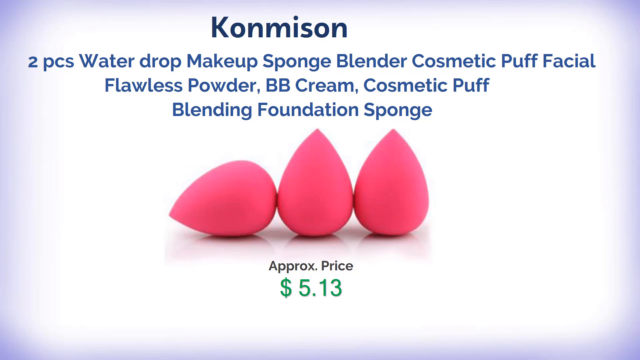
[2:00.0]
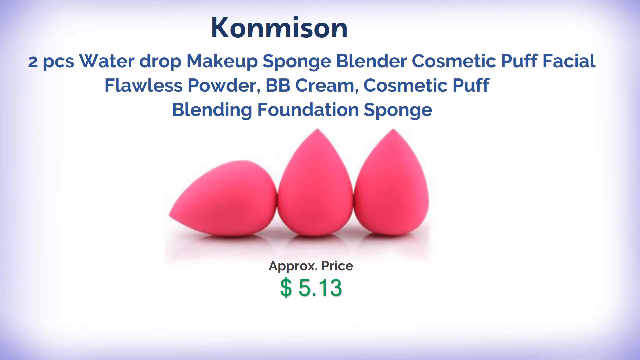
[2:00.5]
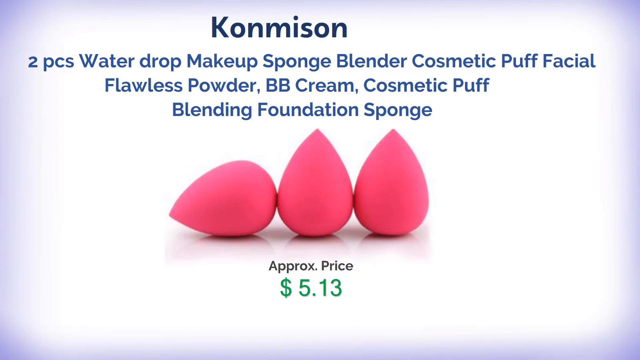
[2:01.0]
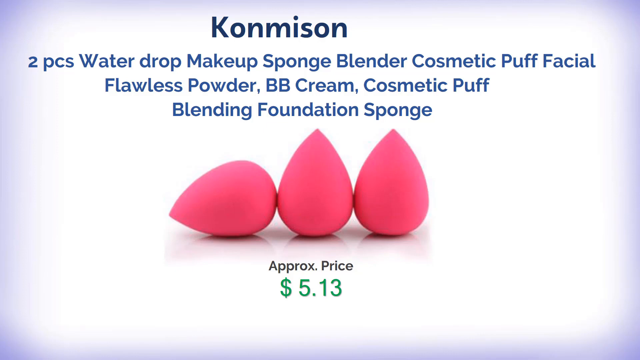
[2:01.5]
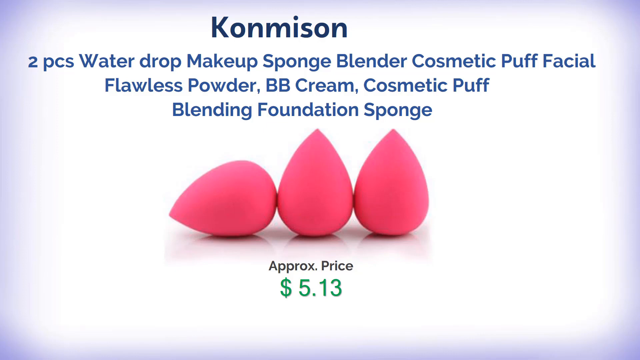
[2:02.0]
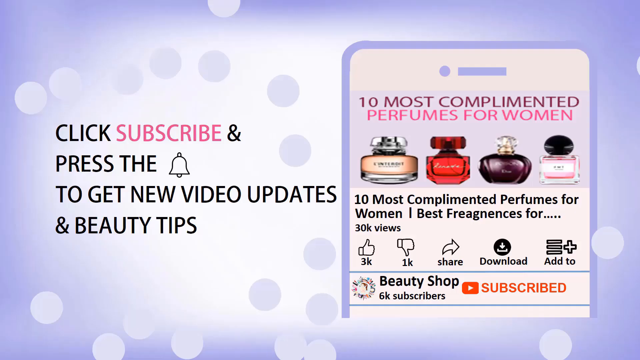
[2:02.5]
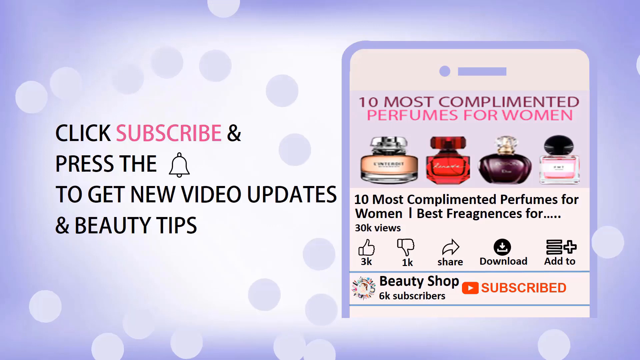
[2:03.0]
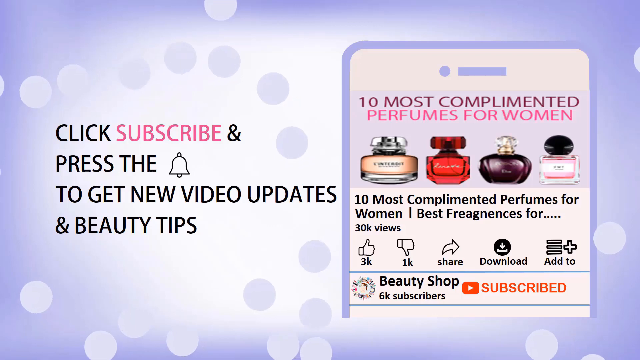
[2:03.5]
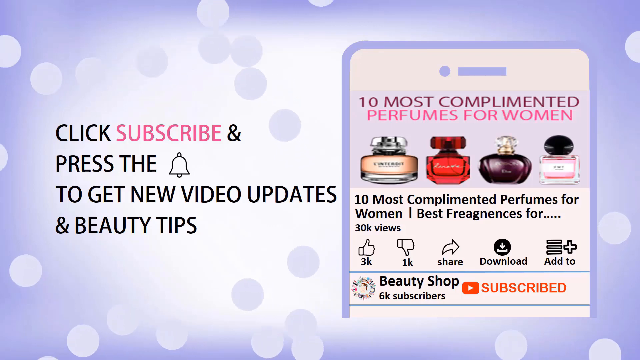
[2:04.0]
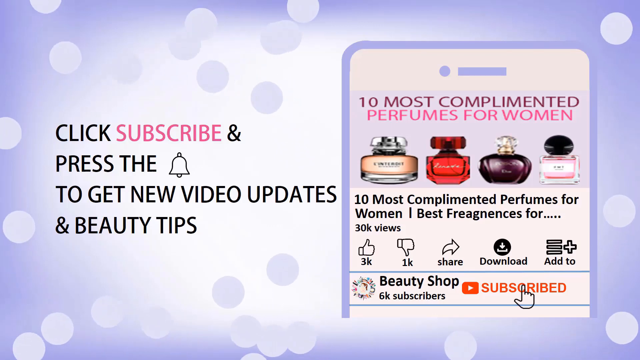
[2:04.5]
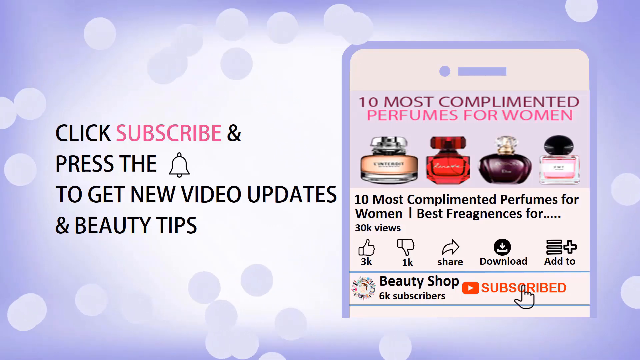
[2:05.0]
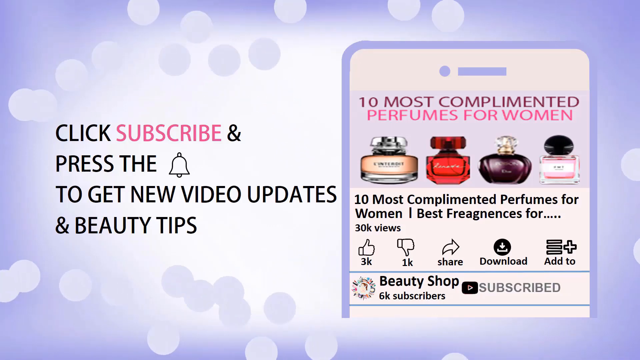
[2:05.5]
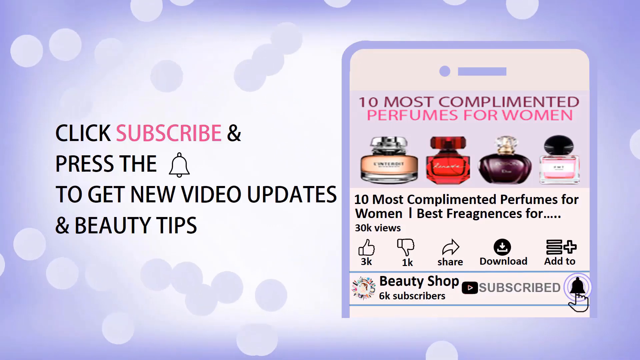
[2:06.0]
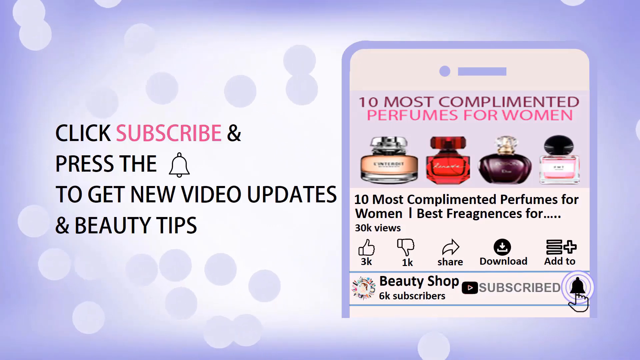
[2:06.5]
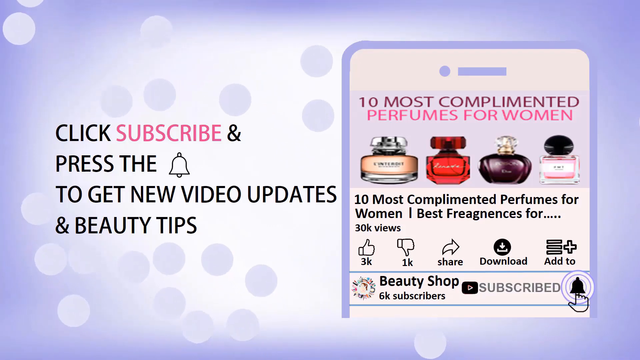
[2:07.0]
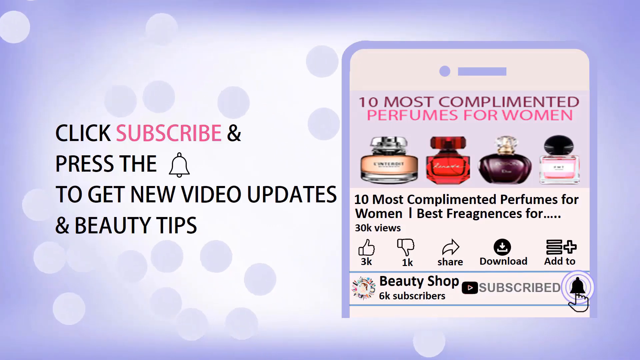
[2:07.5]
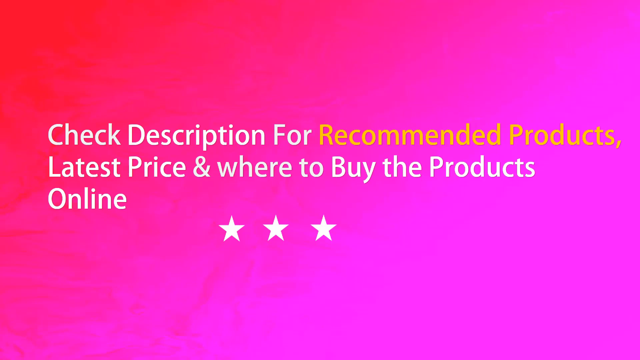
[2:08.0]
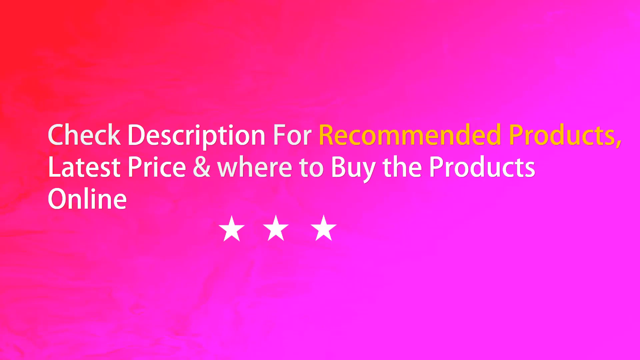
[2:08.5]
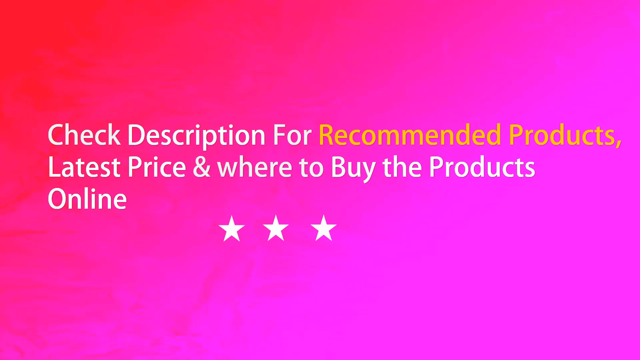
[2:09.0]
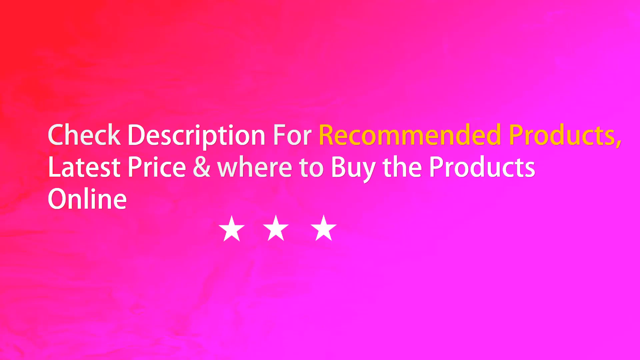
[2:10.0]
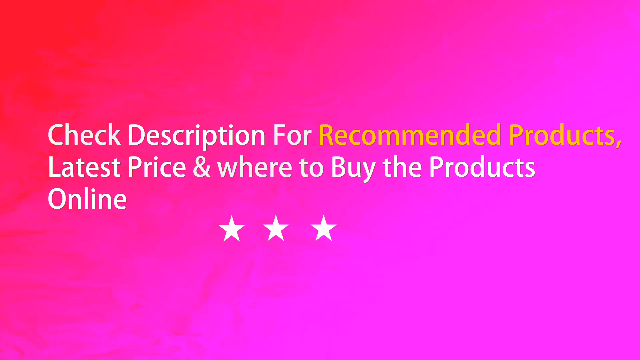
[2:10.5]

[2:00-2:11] A white background has text at the top. The first word, in dark blue, reads "KONMISON". Below it, regular blue text reads "2PCS water drop makeup sponge blender cosmetic puff facial flawless powder BB cream cosmetic puff blending foundation sponge". Below that are three teardrop-shaped items, all pinkish red. Below them, black text reads "approximate price", and below that green numbers read "$5.13". The scene changes to a purple and white background with little white circles or polka dots moving in different directions. On the left, text reads "Click Subscribe and press the", followed by a picture of a bell, then "to get the new video updates and beauty tips". On the right is "10 Most Complimented Perfumes for Women", with four bottles of perfume below it, and below them black text reading "10 Most Complimented Perfumes for Women" followed by a line, "Best Fragrances 4" and five little periods. It also shows 30,000 views.